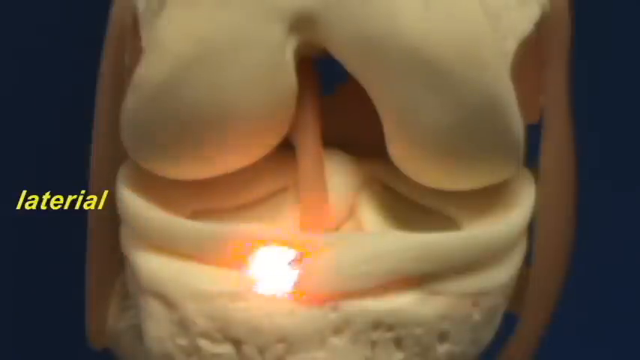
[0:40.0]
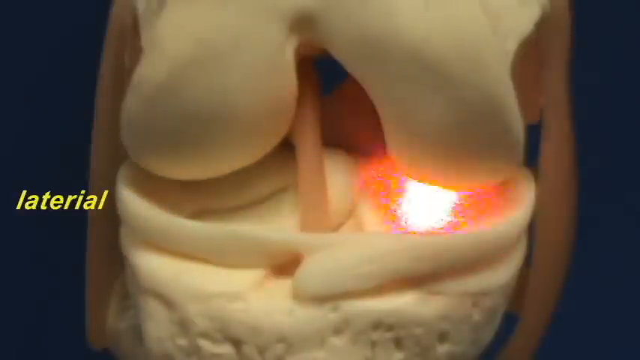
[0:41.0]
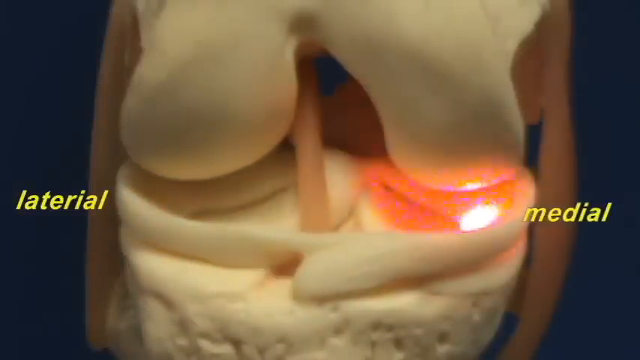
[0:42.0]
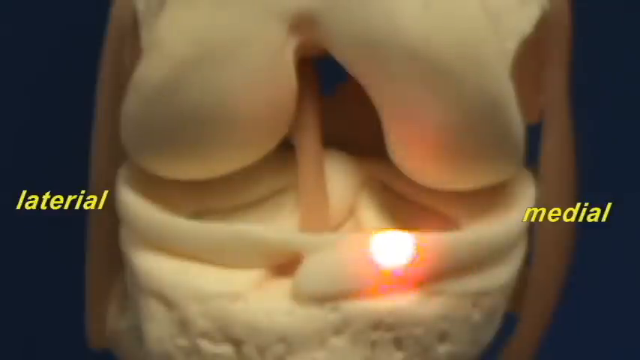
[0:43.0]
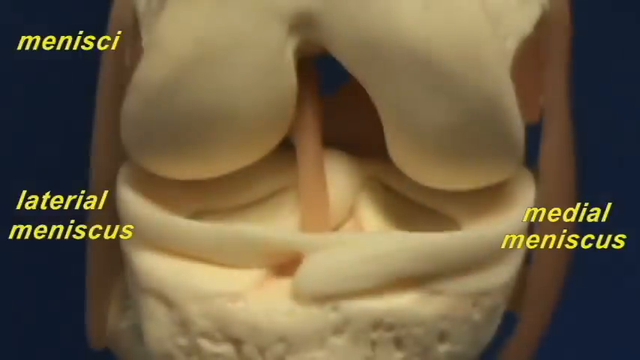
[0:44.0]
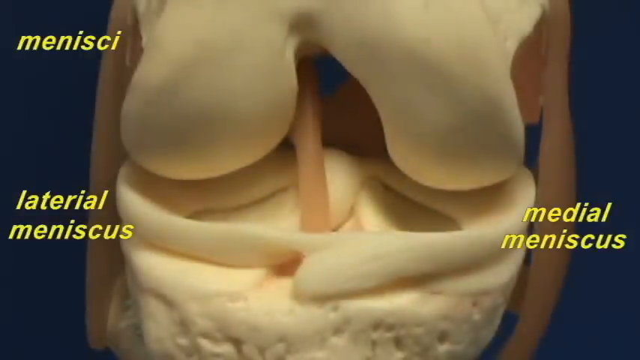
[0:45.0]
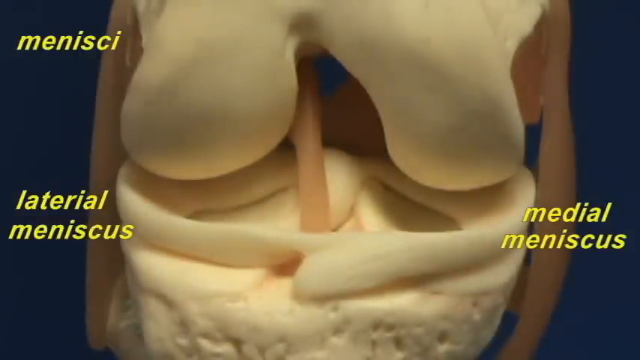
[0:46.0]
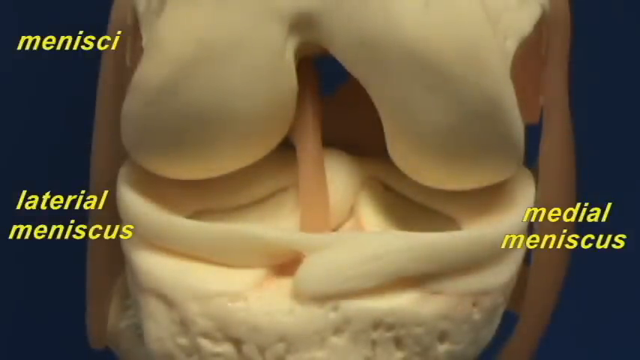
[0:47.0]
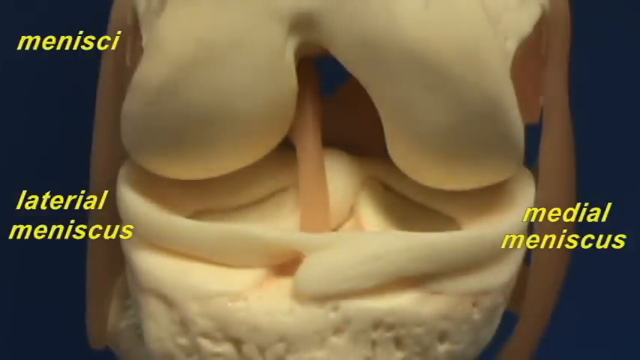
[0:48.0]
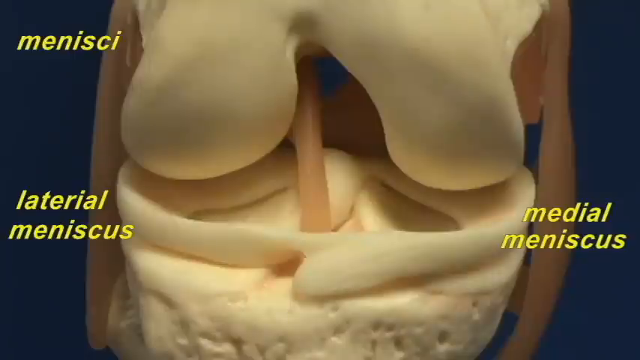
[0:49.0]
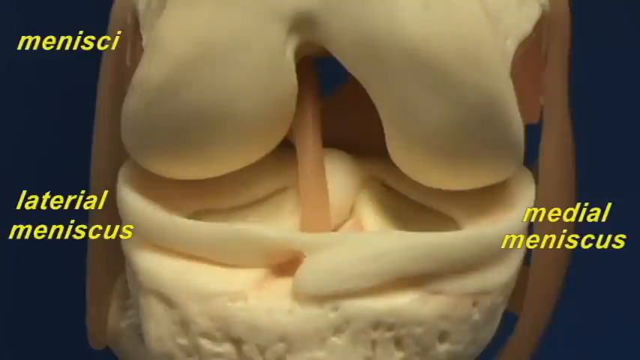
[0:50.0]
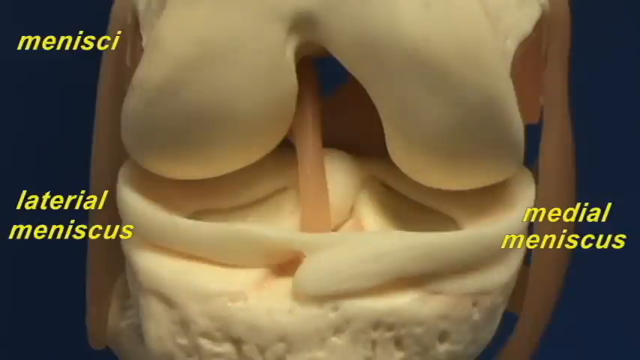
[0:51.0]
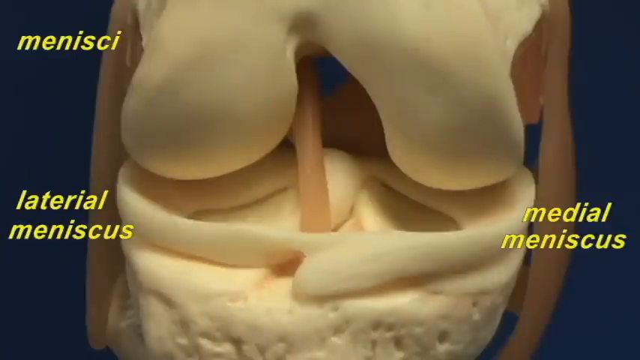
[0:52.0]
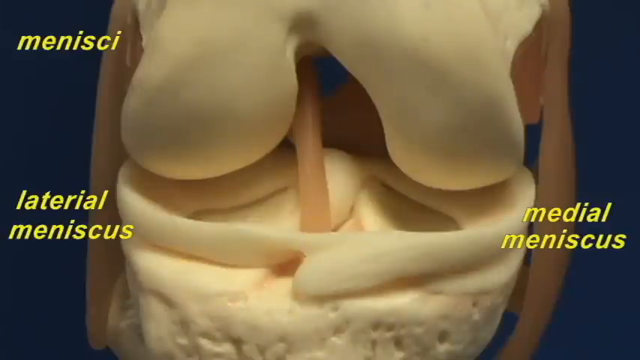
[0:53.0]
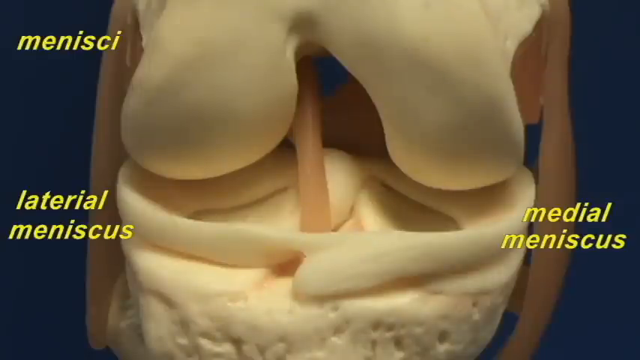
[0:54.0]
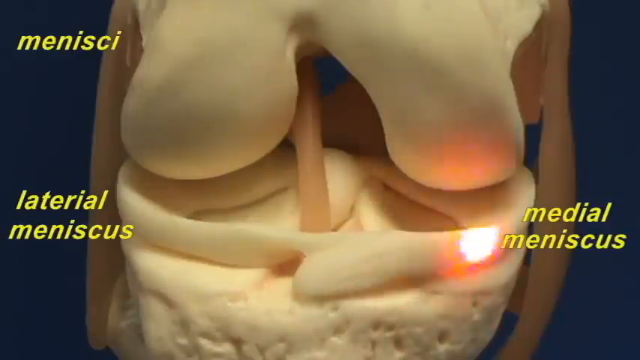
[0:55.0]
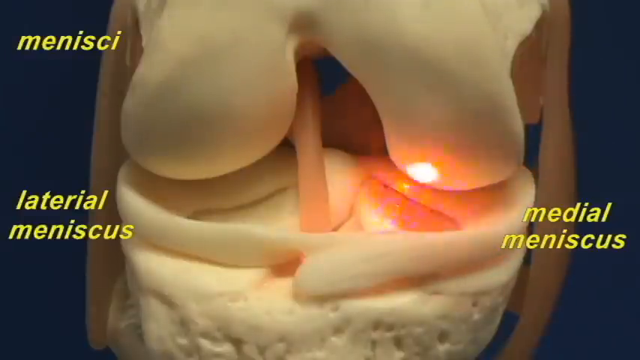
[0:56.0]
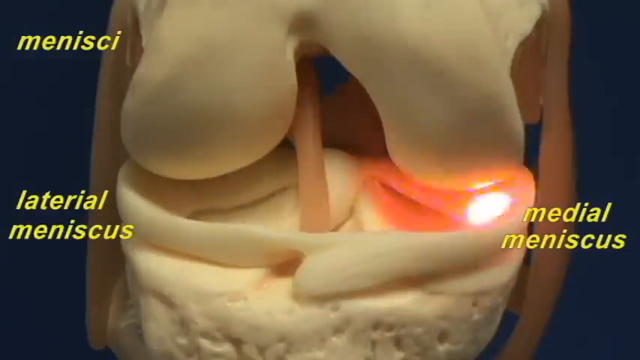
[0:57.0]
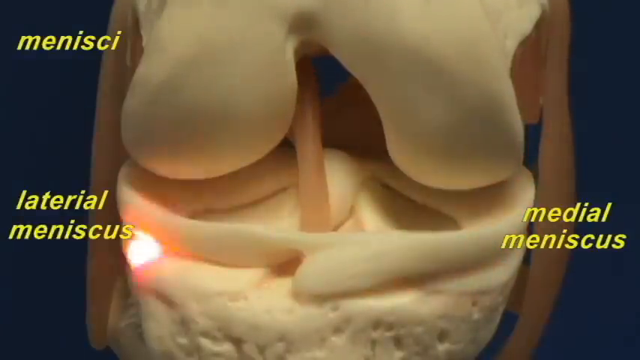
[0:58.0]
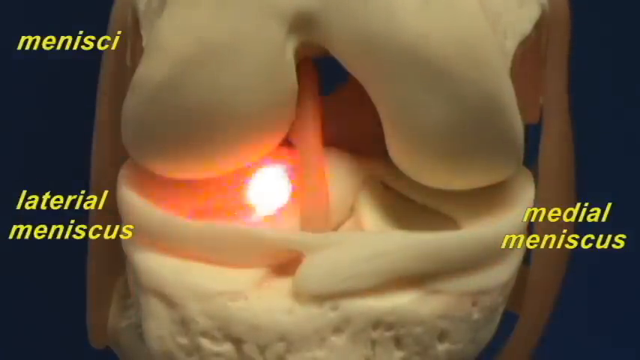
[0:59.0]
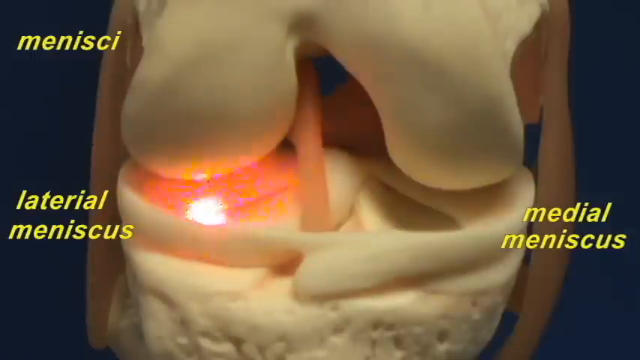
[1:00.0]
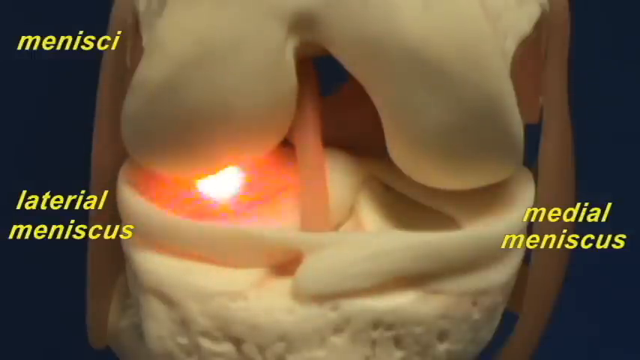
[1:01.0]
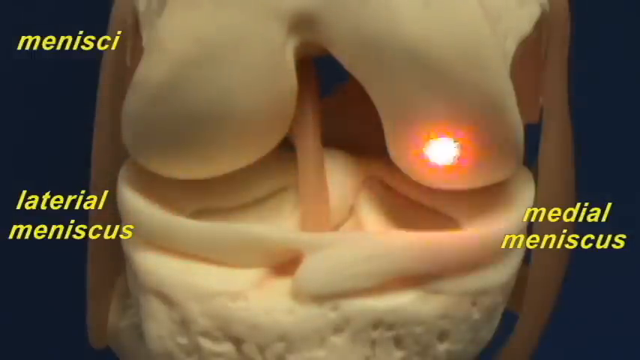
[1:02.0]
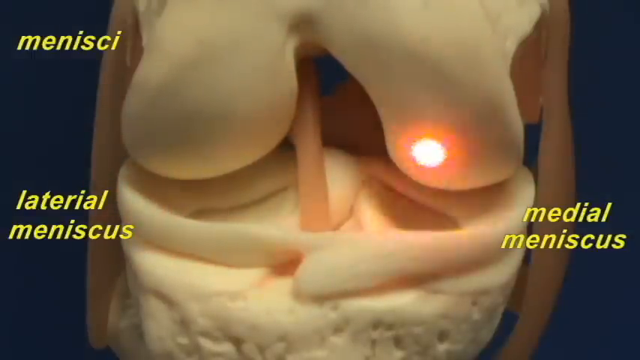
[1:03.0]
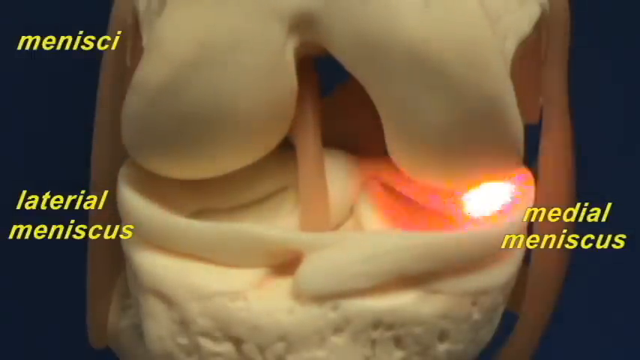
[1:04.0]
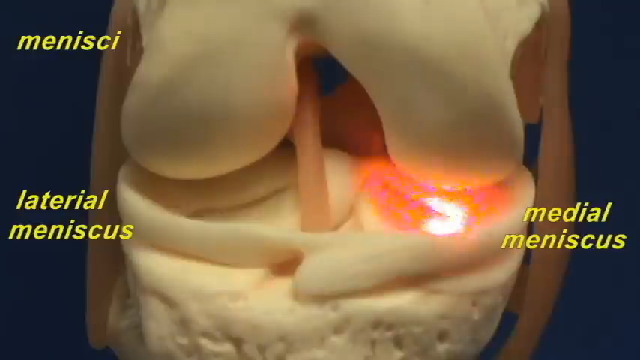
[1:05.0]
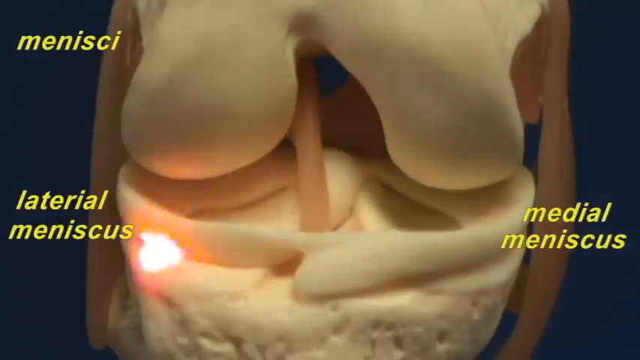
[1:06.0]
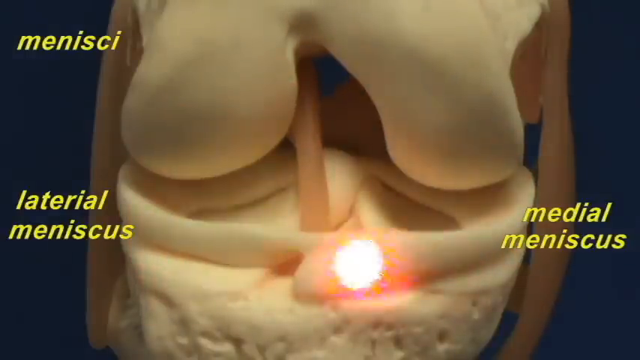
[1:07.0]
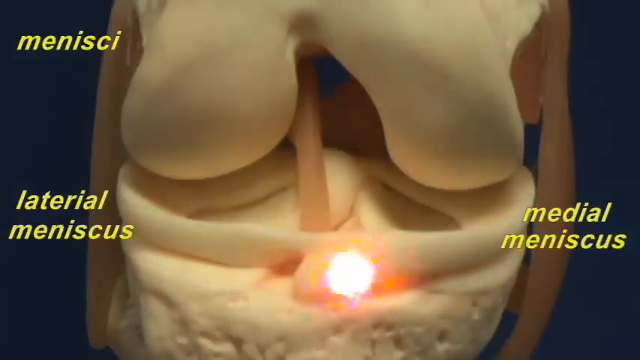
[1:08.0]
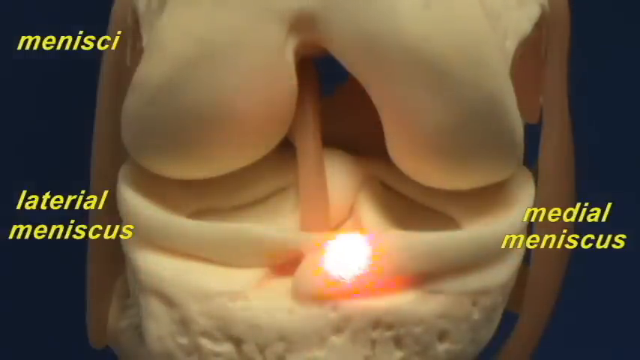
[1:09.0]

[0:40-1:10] The doctor continues using the laser pointer, now focusing on the bone structures and the cartilage structures of the knee joint known as menisci. He points to the lateral meniscus and the medial meniscus. Text appears highlighting each area: "menisci," "lateral meniscus," "medial meniscus." The laser pointer stays on some areas for a few seconds and also moves along, tracing the outlines of the menisci.